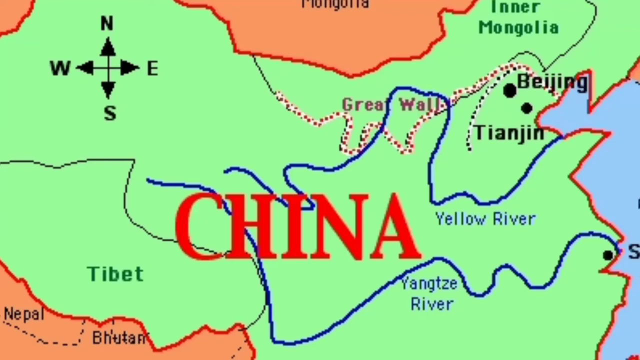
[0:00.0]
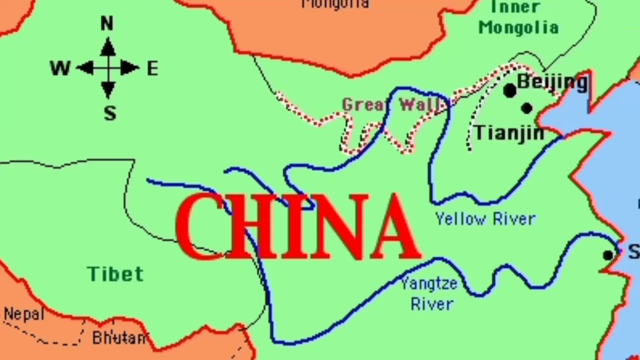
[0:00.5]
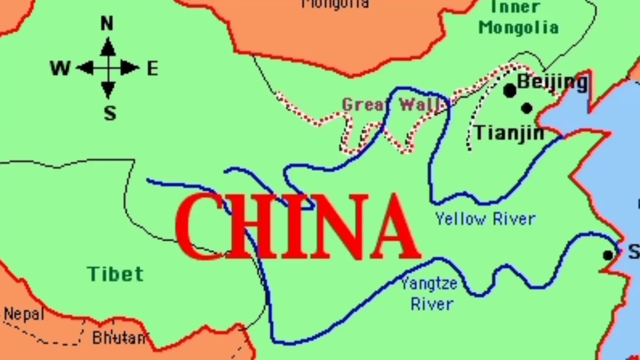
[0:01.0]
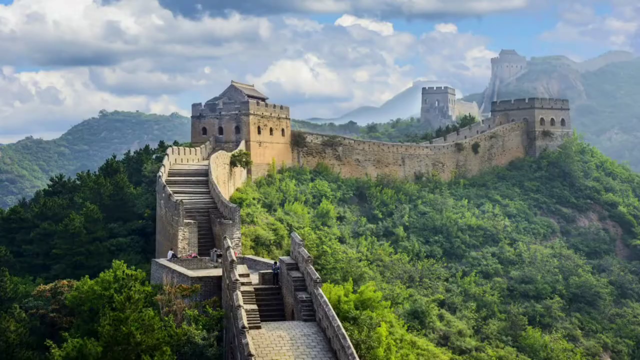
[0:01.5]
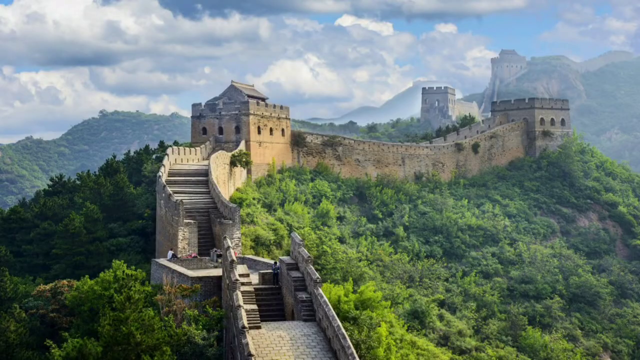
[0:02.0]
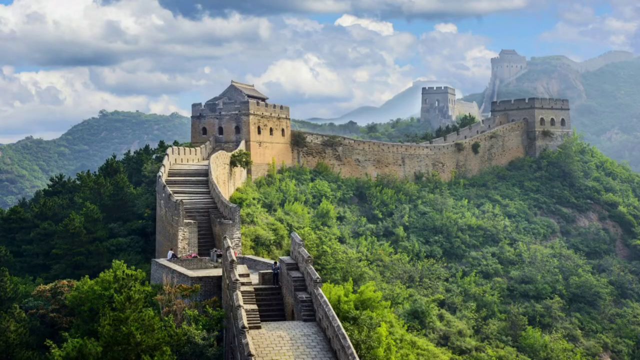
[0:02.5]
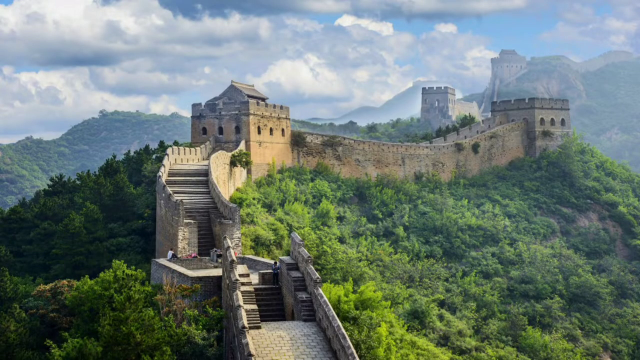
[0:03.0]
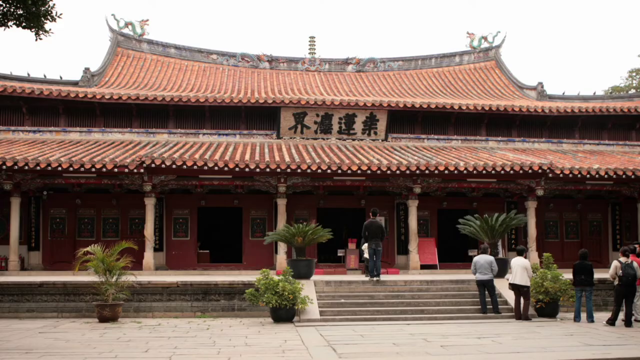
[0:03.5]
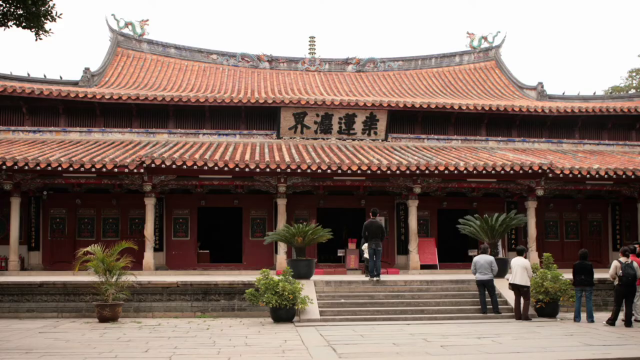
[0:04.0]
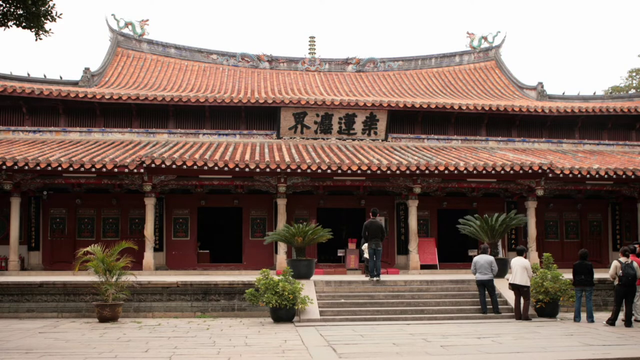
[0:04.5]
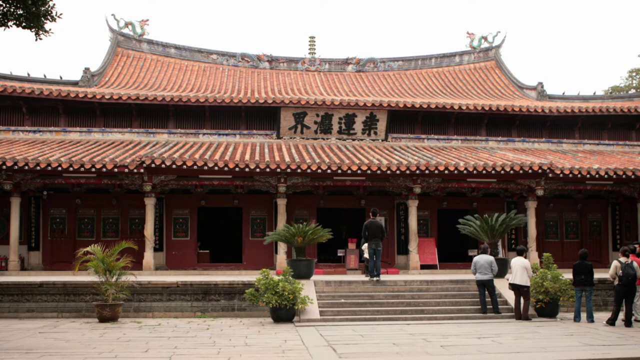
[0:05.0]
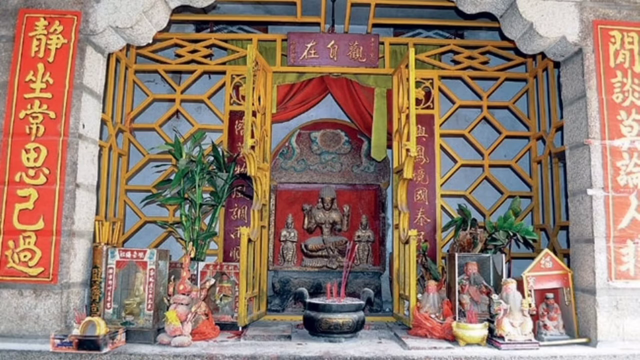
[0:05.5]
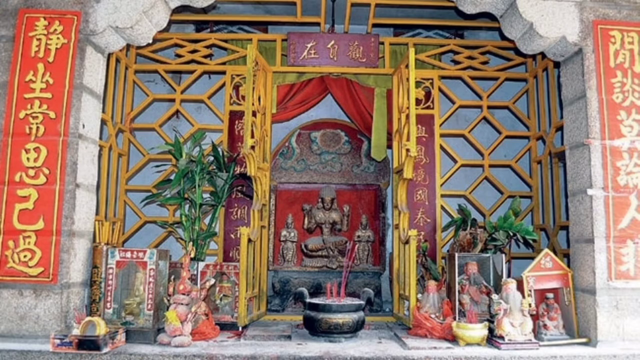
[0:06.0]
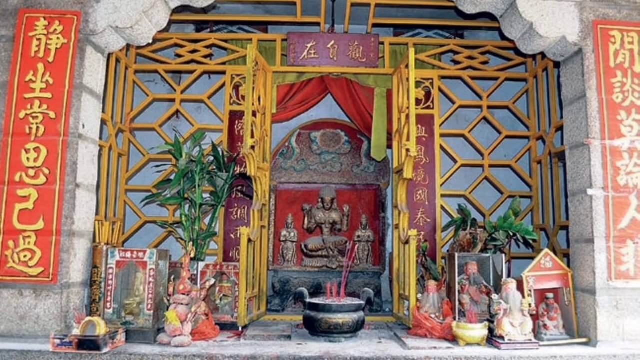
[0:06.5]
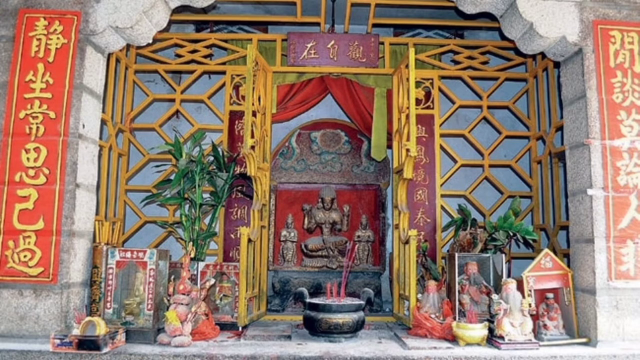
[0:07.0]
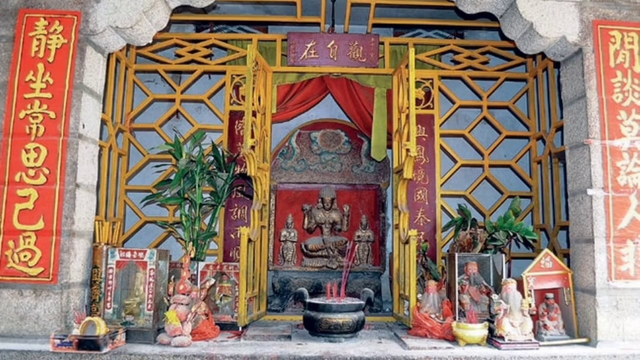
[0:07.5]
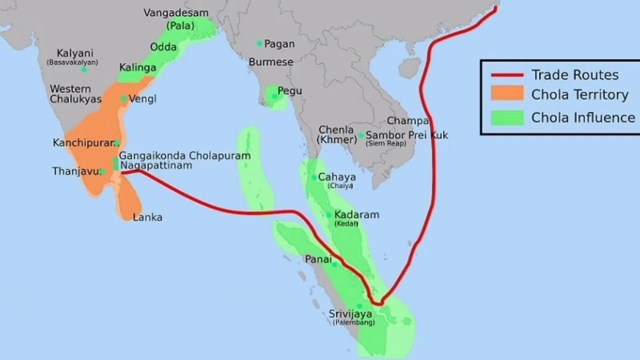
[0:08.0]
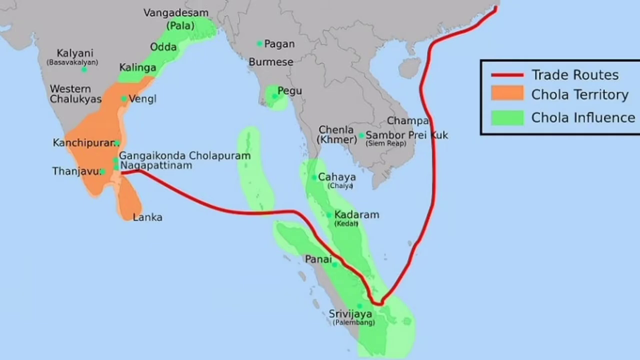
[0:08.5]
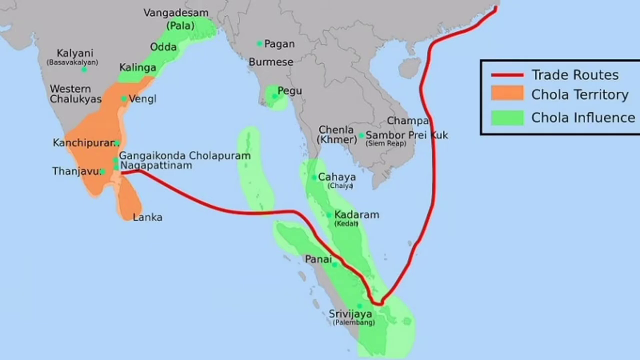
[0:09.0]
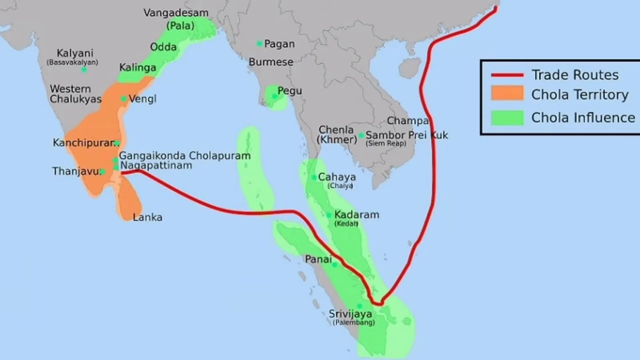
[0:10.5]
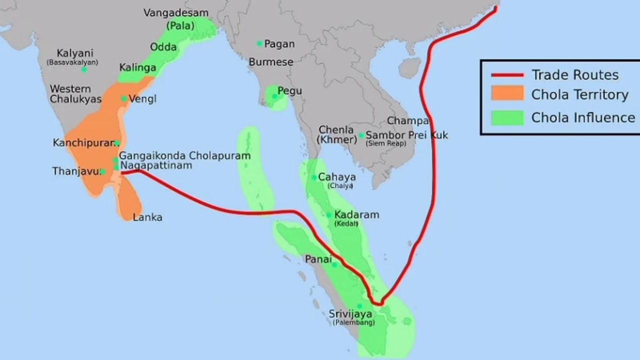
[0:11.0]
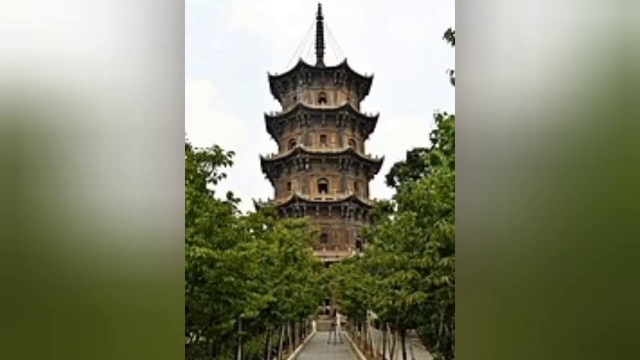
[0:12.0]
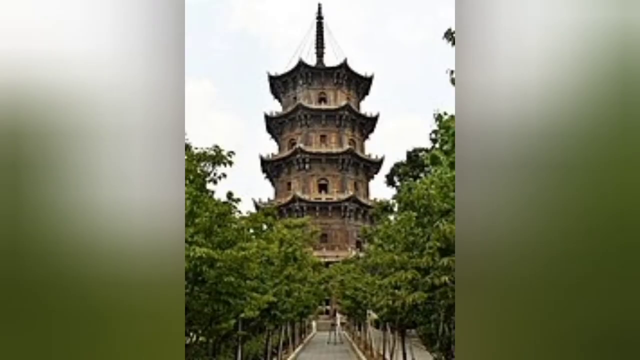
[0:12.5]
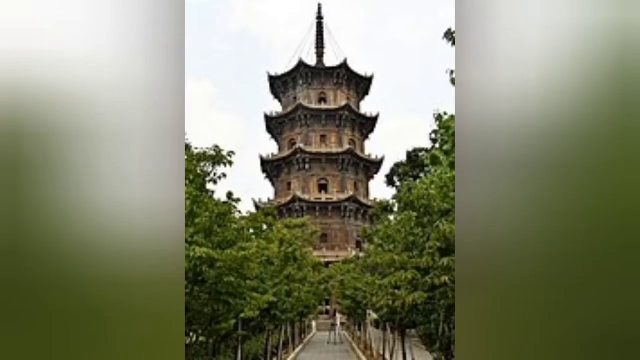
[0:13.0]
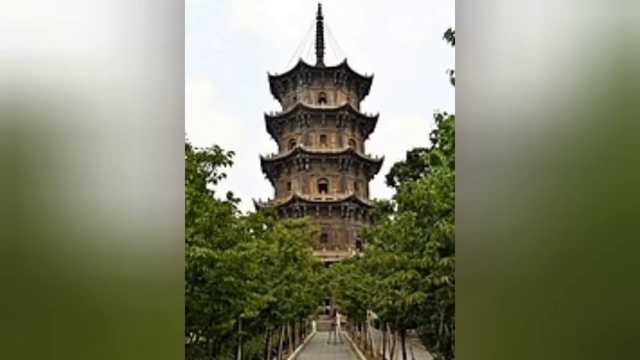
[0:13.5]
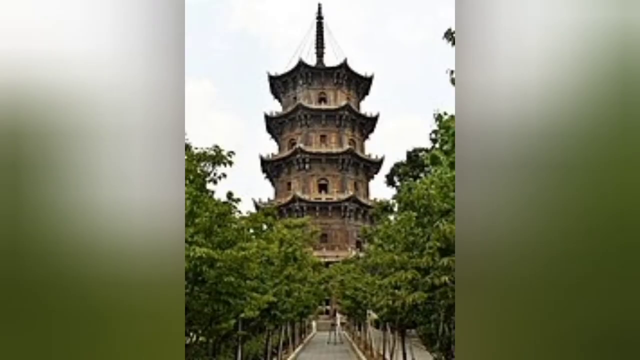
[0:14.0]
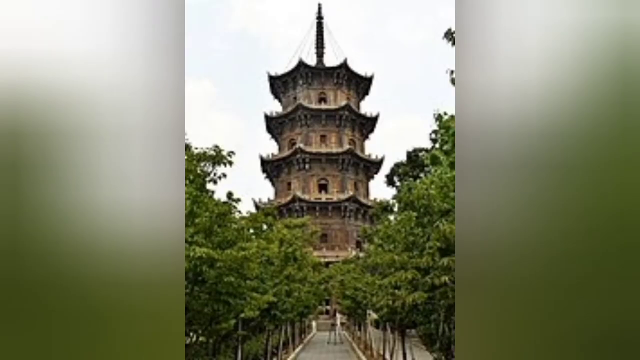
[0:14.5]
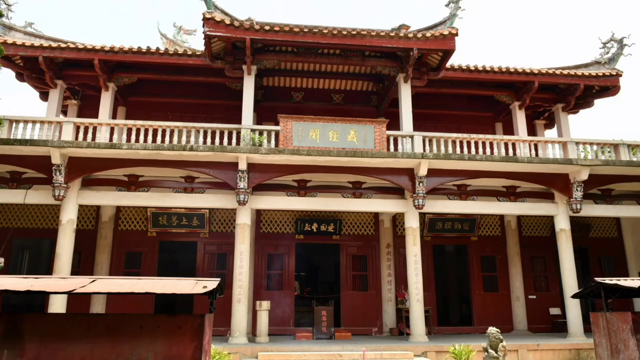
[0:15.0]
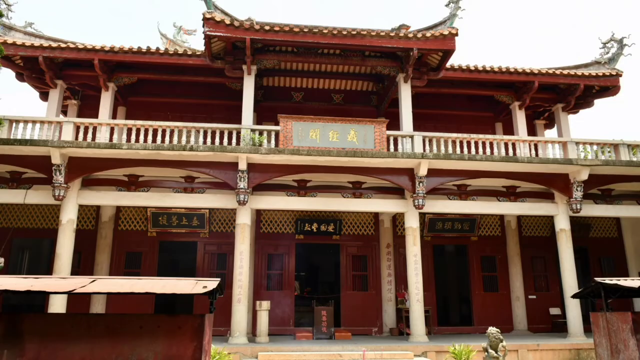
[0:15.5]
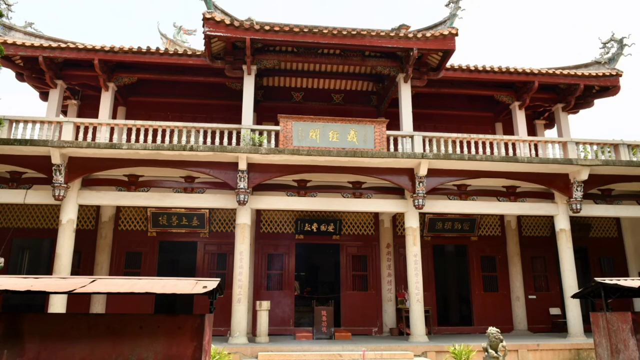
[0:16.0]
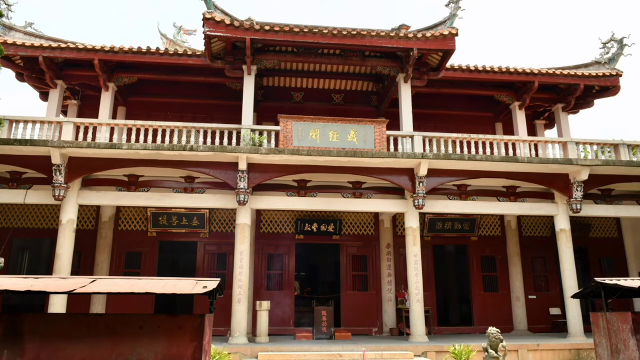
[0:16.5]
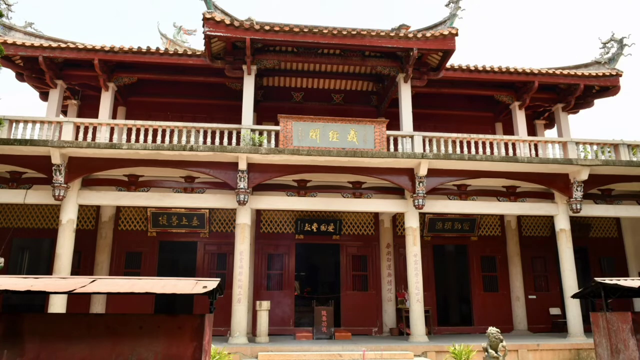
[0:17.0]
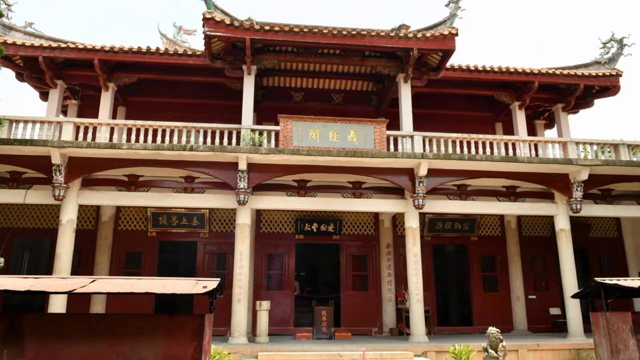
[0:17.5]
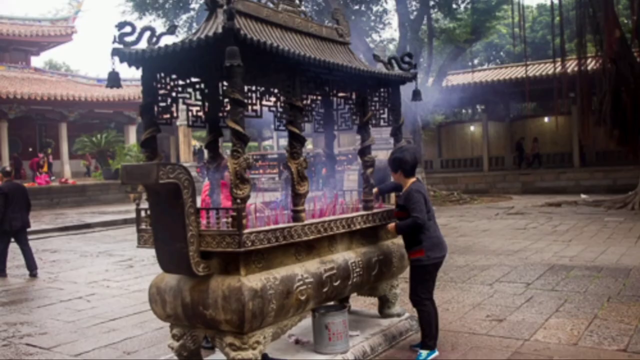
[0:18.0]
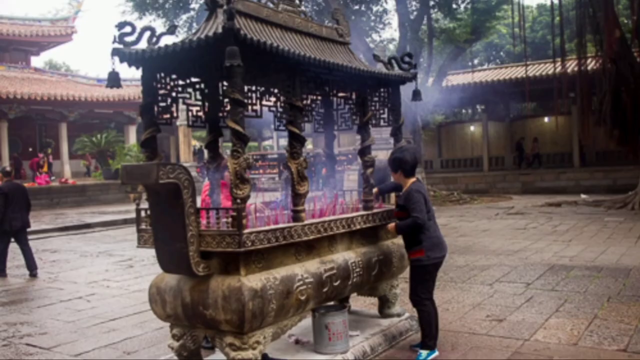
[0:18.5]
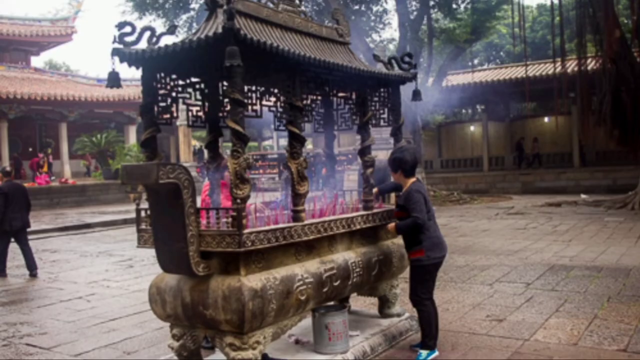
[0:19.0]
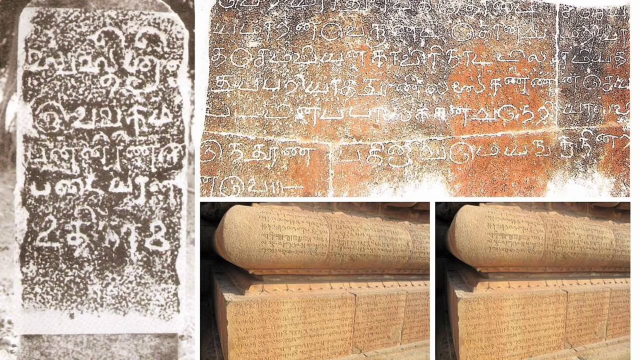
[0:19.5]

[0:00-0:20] A map of ancient China shows the Great Wall highlighted, along with the cities of Beijing and Tianjin and China's two great rivers, the Yellow River and the Yangtze. Tibet, Inner Mongolia and the foreign state of Mongolia are marked, and a letter S appears to be visible near the coast at the mouth of the Yangtze, possibly indicating Shanghai. The video then shows an image of the Great Wall, Buddhist temples, trade routes to southern India, a Chinese tower, wooden buildings, religious shrines and written tablets. Very ornate, colourful temples appear, seemingly made mainly of wood, with traditional curved Chinese roofs.